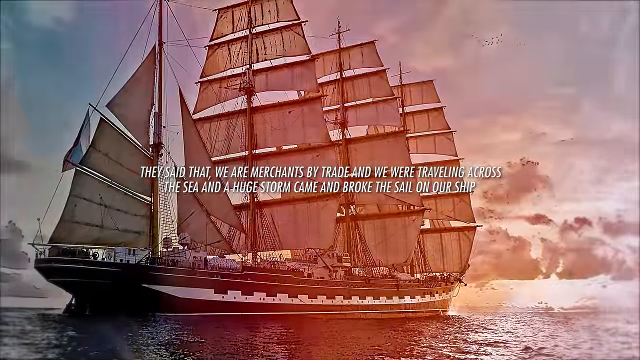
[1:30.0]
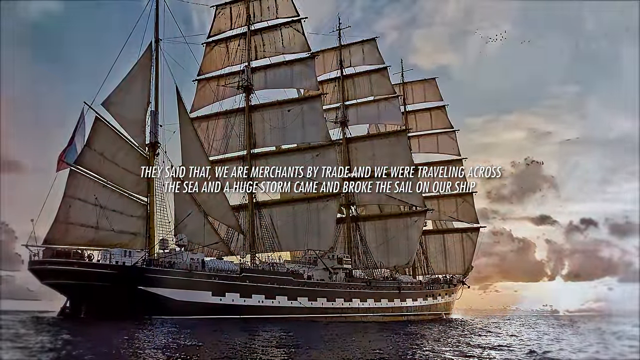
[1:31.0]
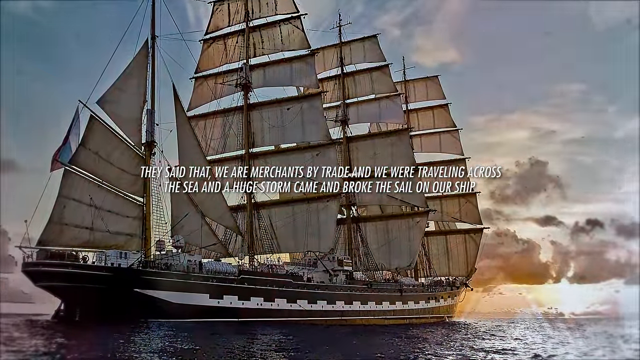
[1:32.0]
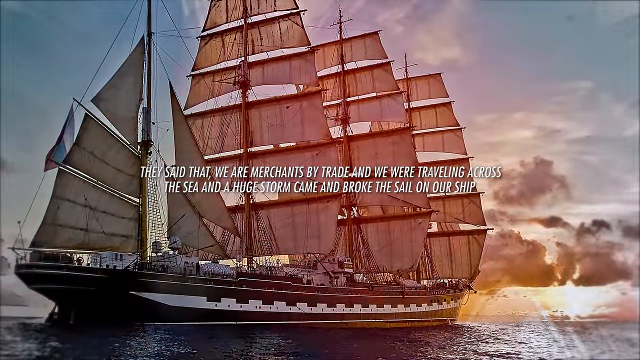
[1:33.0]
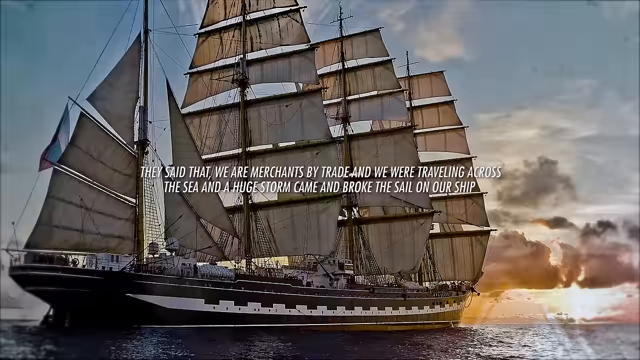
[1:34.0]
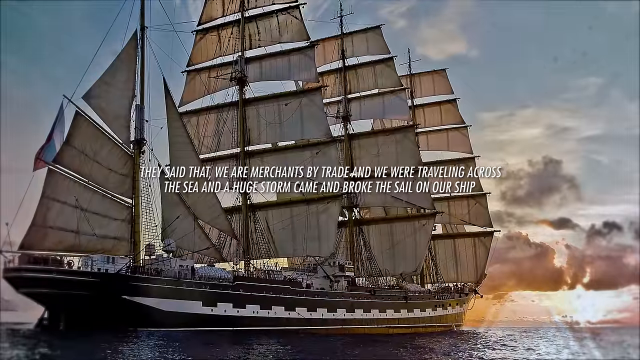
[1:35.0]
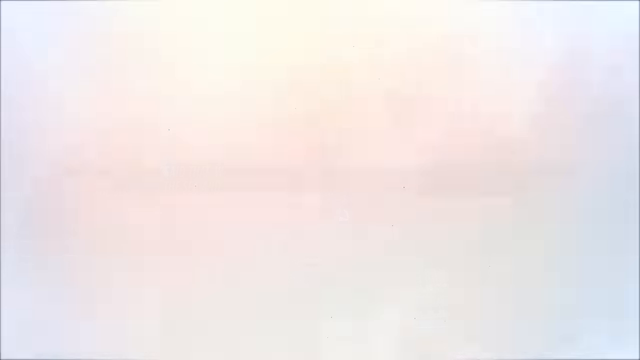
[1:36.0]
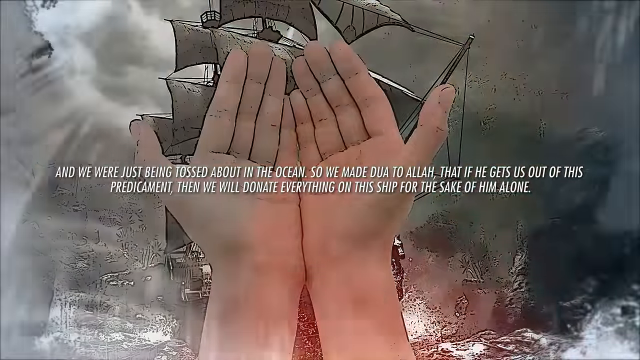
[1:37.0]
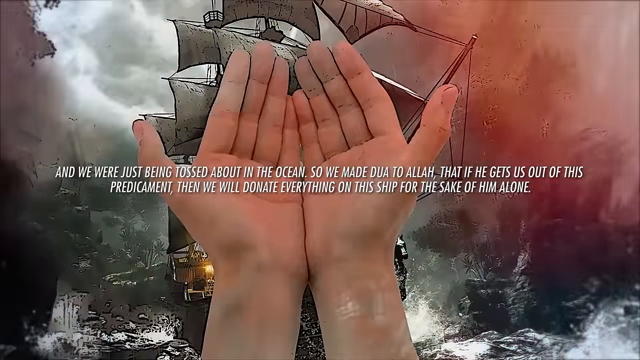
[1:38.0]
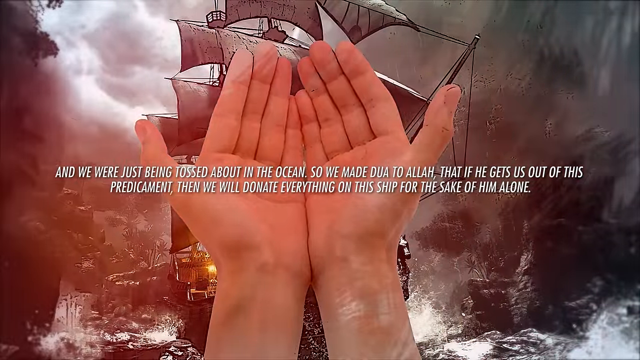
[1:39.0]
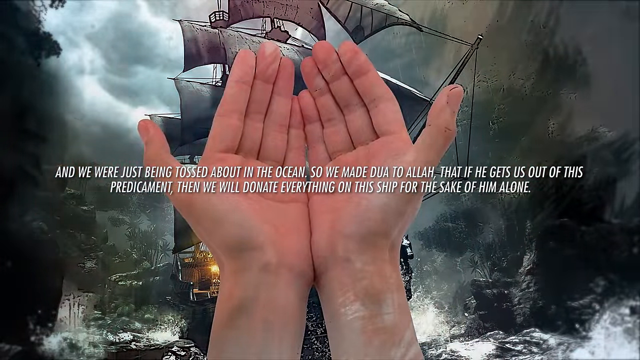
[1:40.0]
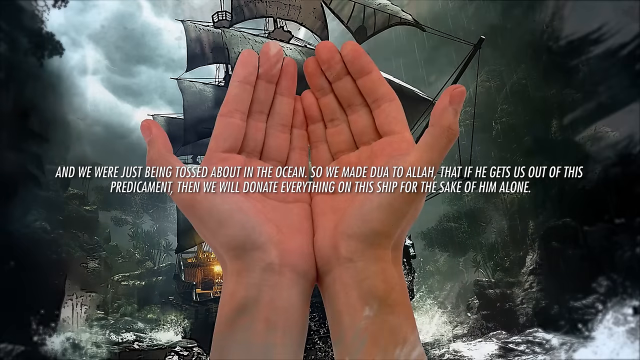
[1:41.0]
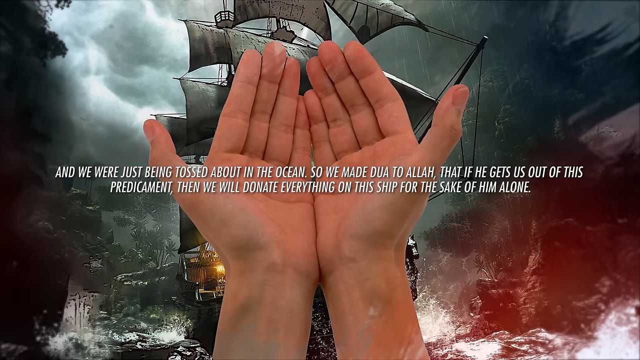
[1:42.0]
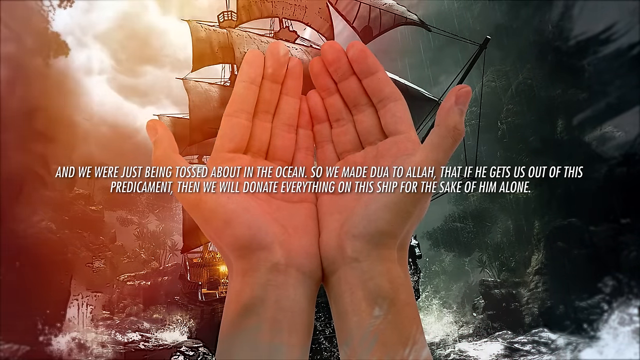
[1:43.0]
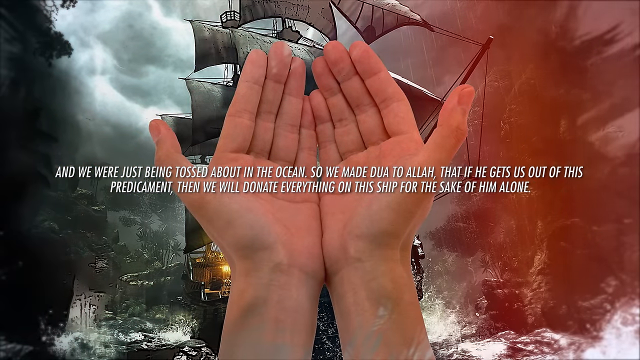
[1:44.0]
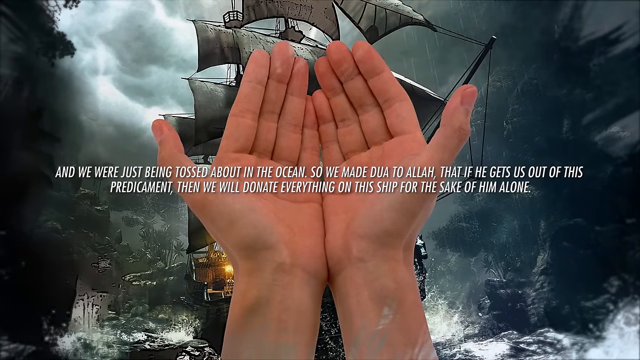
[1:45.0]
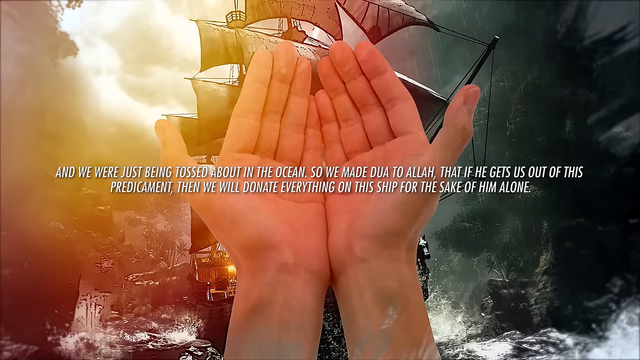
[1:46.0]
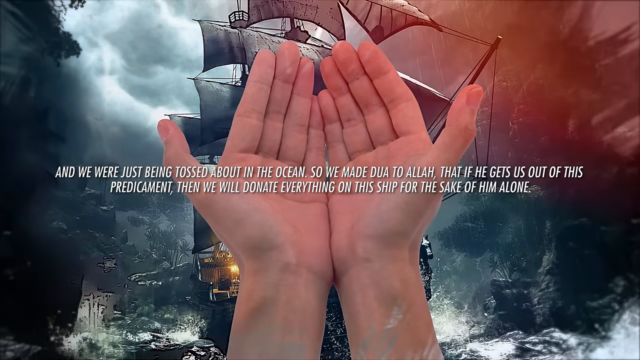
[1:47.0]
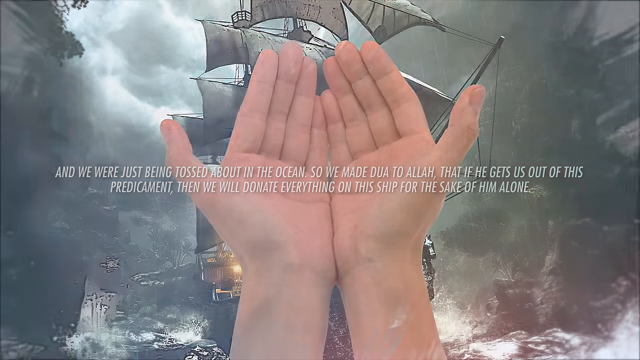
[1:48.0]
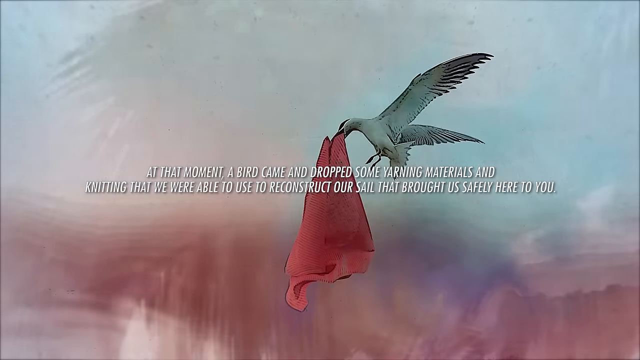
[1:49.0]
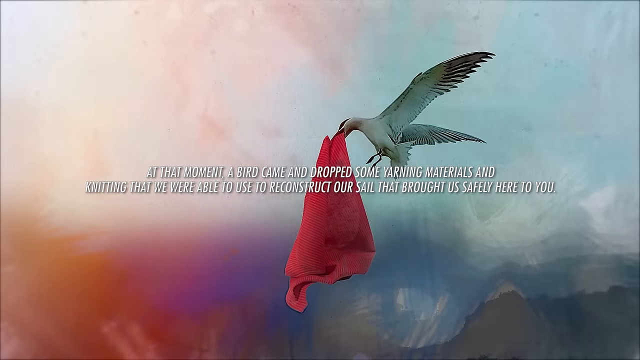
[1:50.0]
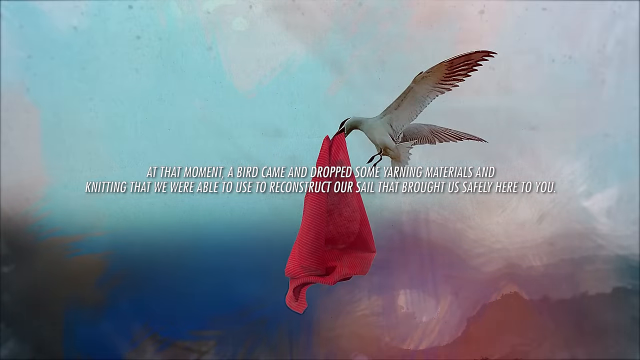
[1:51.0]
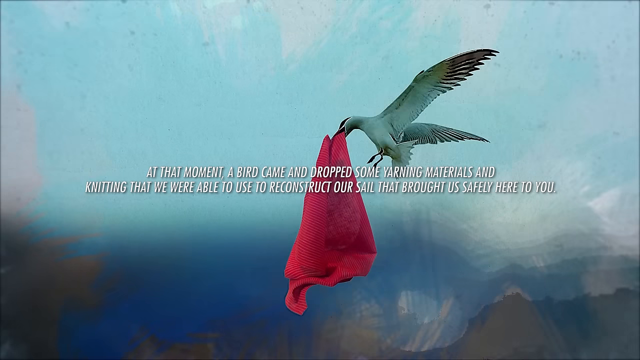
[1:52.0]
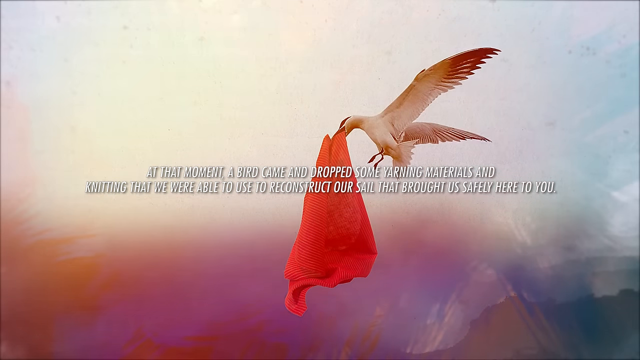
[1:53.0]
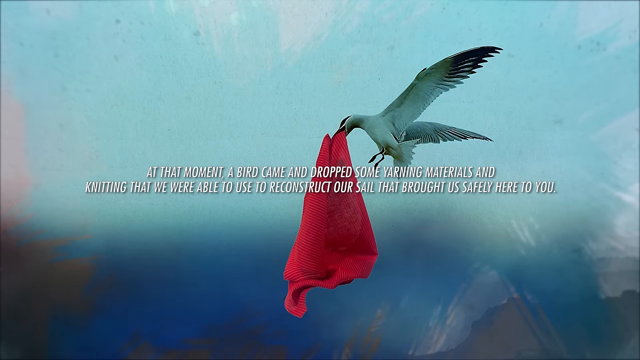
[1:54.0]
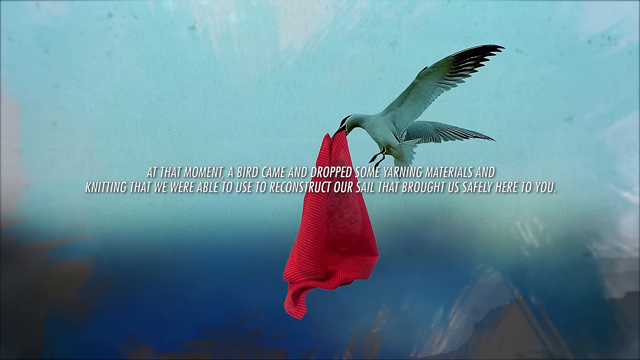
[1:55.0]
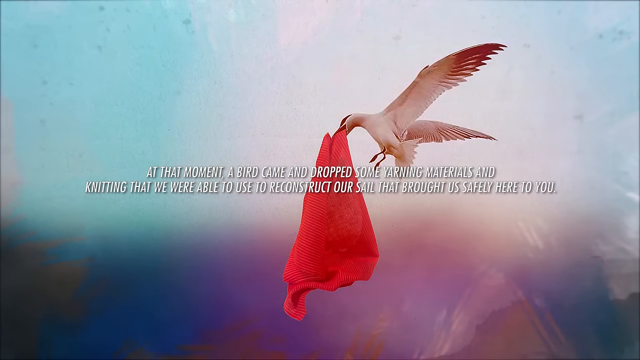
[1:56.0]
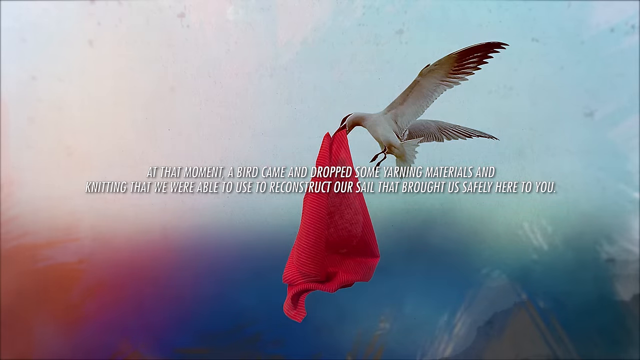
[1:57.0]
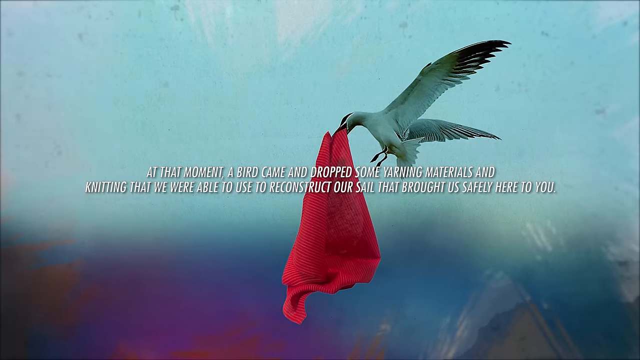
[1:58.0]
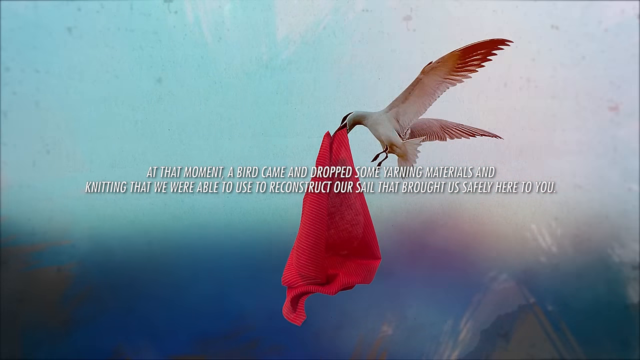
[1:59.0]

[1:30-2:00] Red light flashes over the boat a couple of times as the view slowly zooms in on the boat picture. After another fade to white, a new picture of the boat appears with a person's hands covering it. The hands are cupped together and facing upward, as if to receive water, money or a gift. They are raised so the insides face the viewer and cover most of the body of the boat, although some of the sails and rigging and a little bit of the star on the sides are still visible. More text in the middle talks about their trip in the storm. The colors fade so the actual colors of the picture and setting become visible, showing the boat traveling through stormy waters that look like they are splashing heavily against it, with dark grayish-black rocks on the sides of the boat. Red hues flash over the still image a couple of times, sometimes on the left half and sometimes on the right half. It then fades to white, and a seagull appears facing left, its wings stretched out behind it, looking like it is about to slow down or start landing. It has a red rag in its mouth. The text in the middle talks about a bird coming to drop some yarn materials.